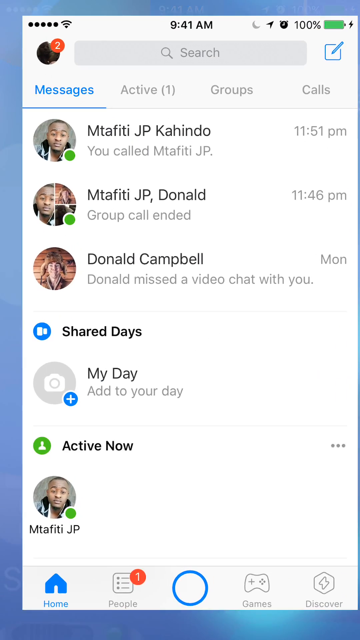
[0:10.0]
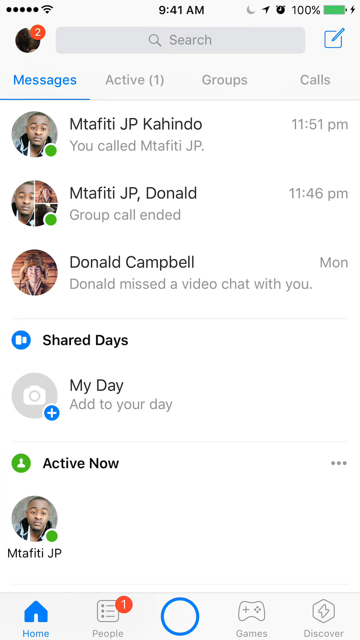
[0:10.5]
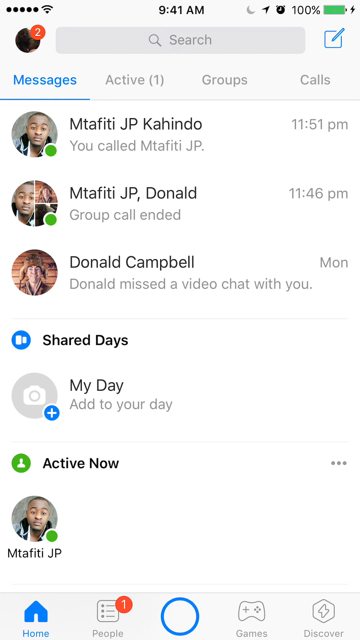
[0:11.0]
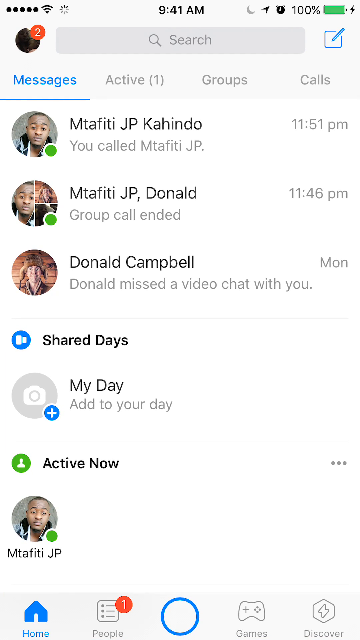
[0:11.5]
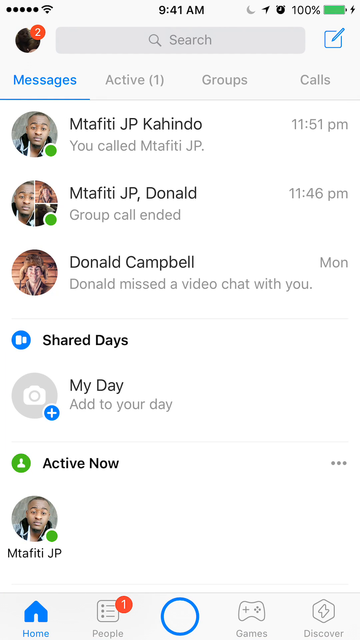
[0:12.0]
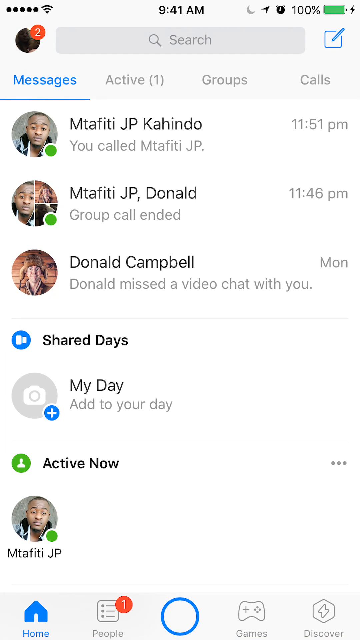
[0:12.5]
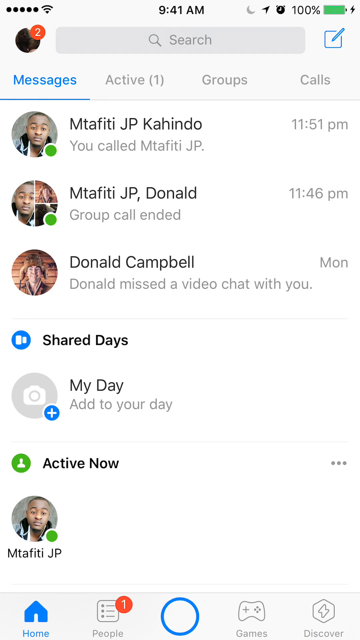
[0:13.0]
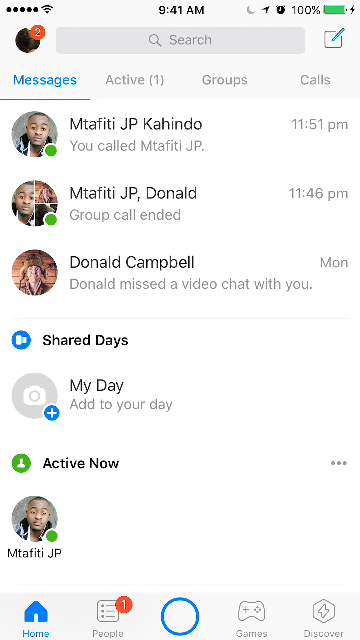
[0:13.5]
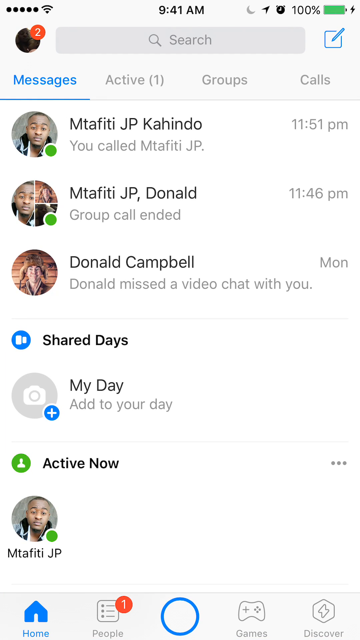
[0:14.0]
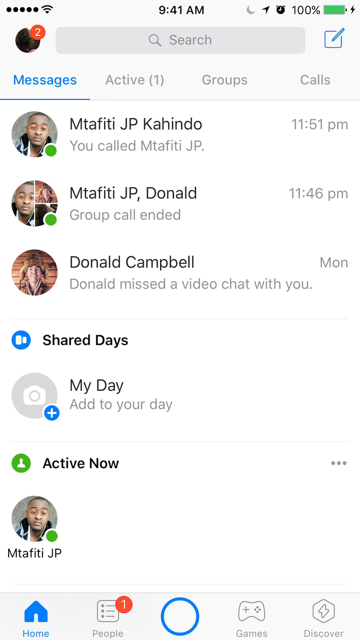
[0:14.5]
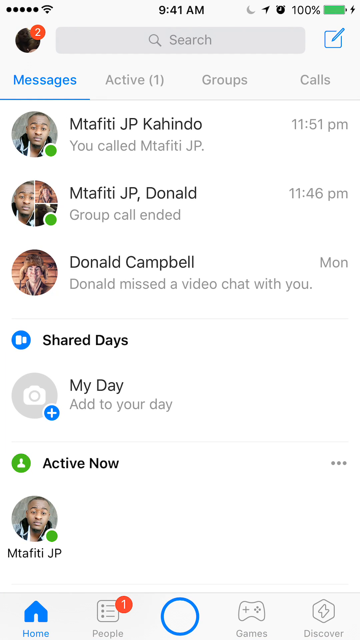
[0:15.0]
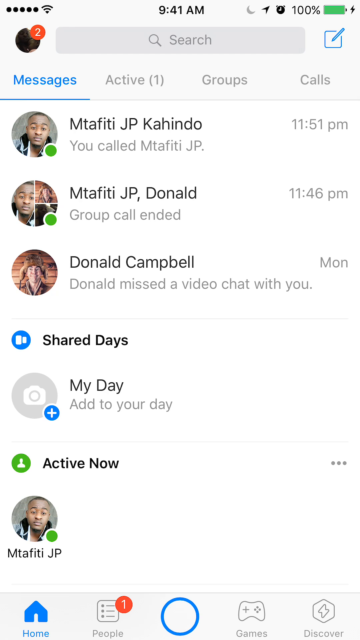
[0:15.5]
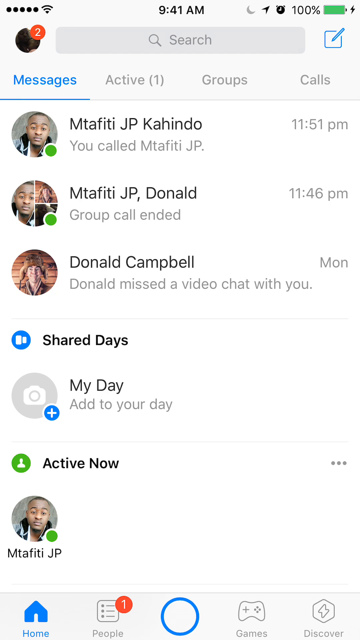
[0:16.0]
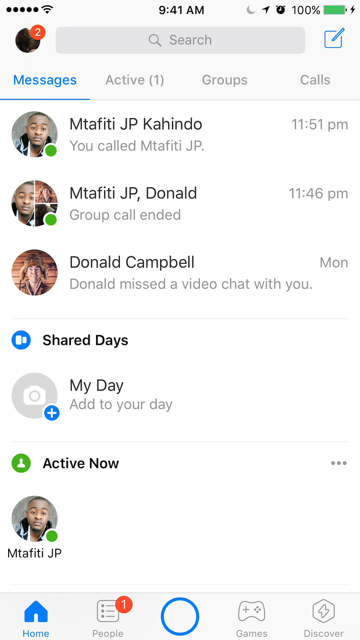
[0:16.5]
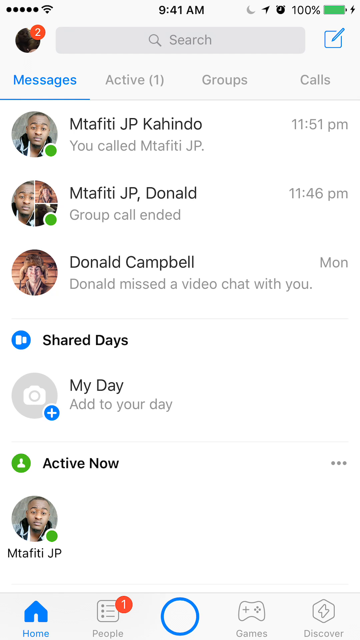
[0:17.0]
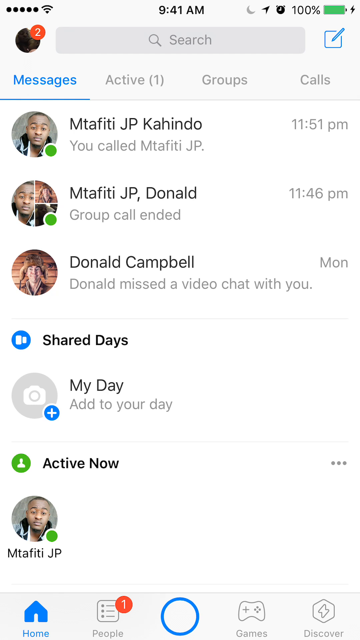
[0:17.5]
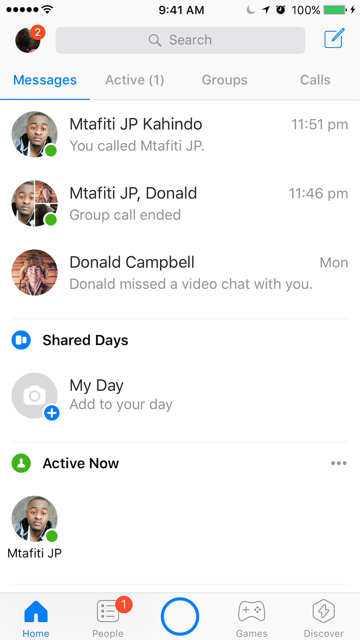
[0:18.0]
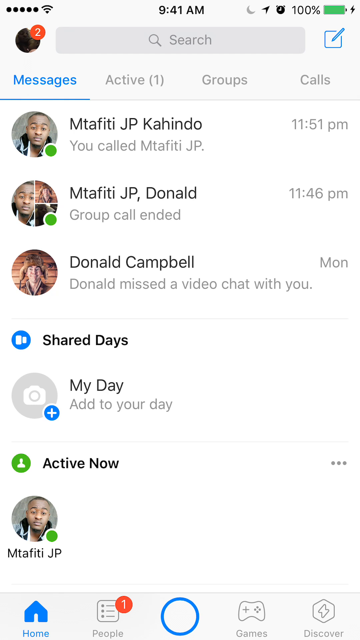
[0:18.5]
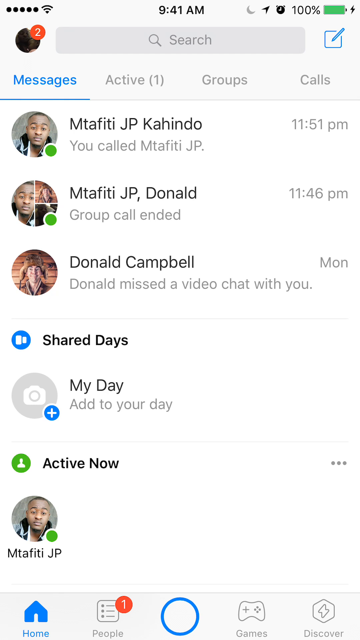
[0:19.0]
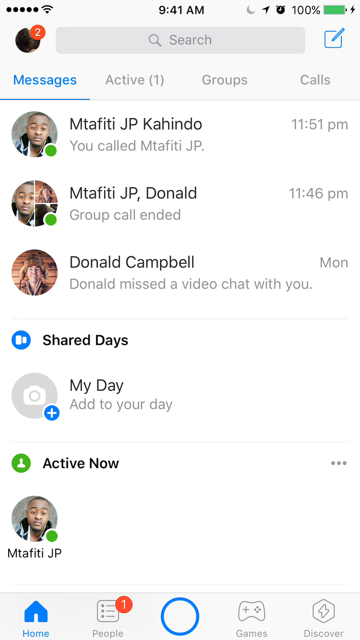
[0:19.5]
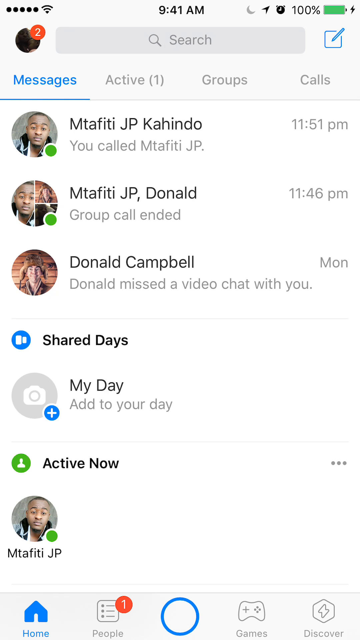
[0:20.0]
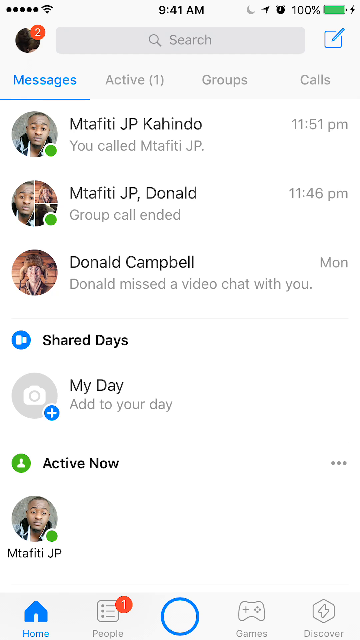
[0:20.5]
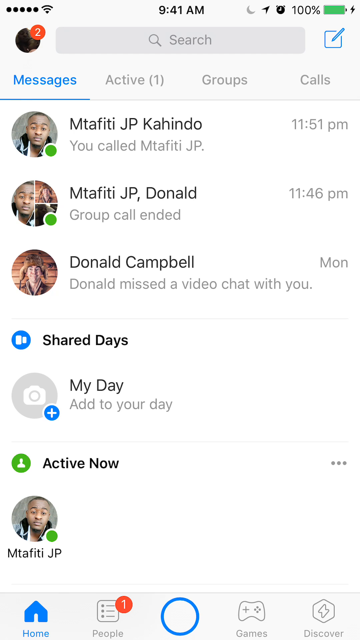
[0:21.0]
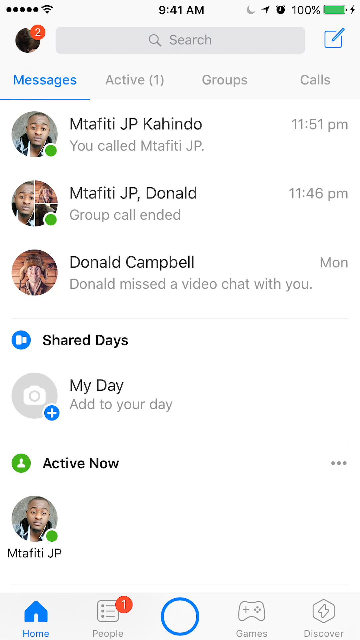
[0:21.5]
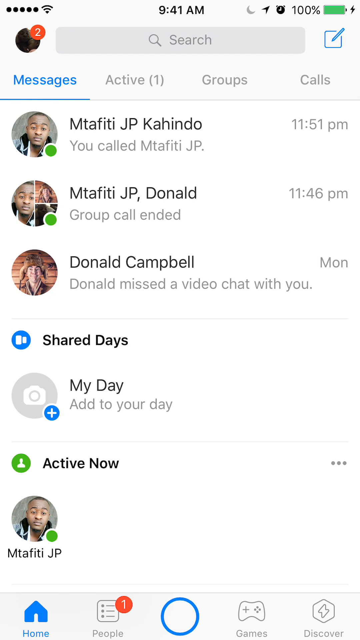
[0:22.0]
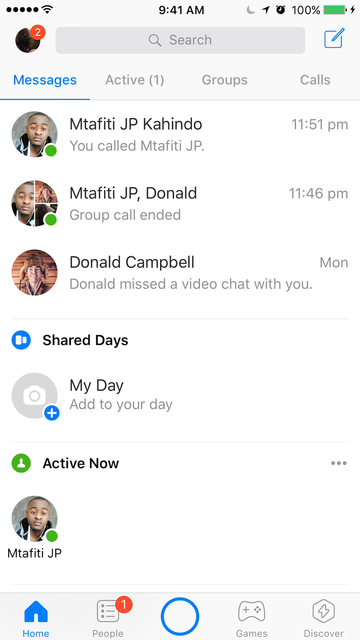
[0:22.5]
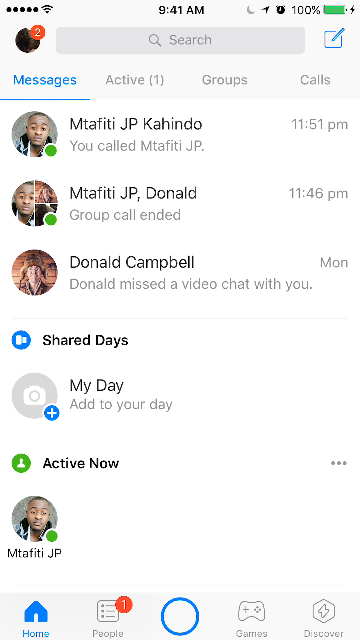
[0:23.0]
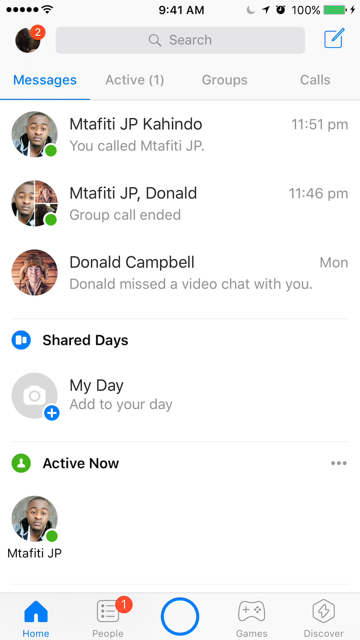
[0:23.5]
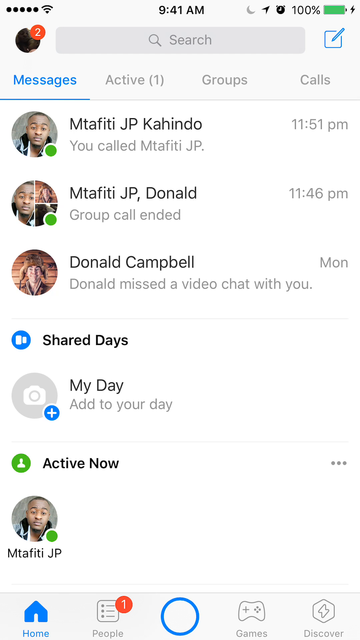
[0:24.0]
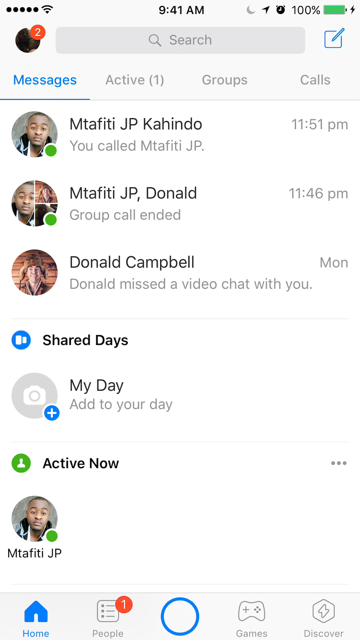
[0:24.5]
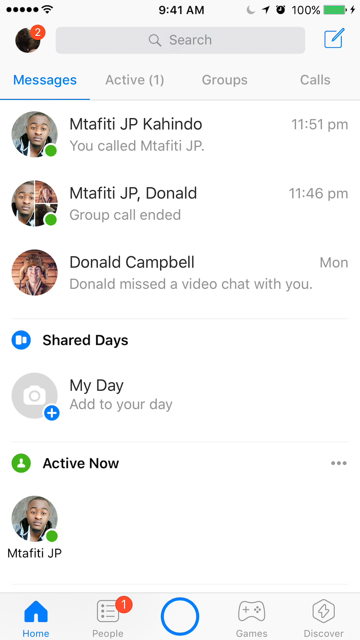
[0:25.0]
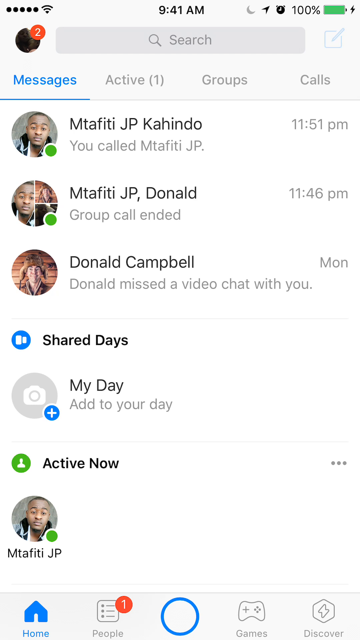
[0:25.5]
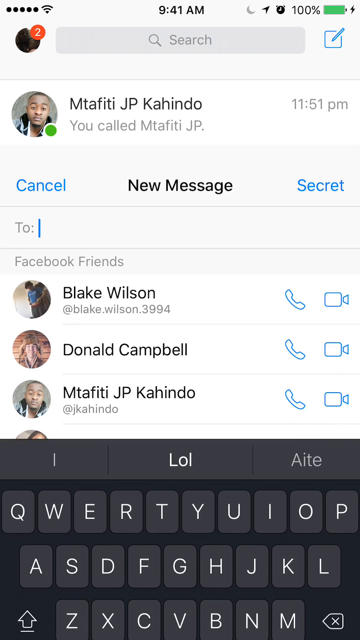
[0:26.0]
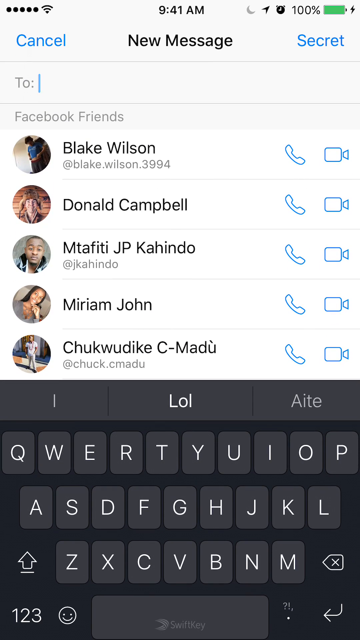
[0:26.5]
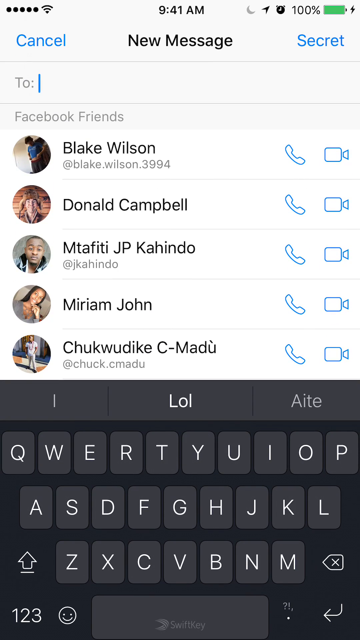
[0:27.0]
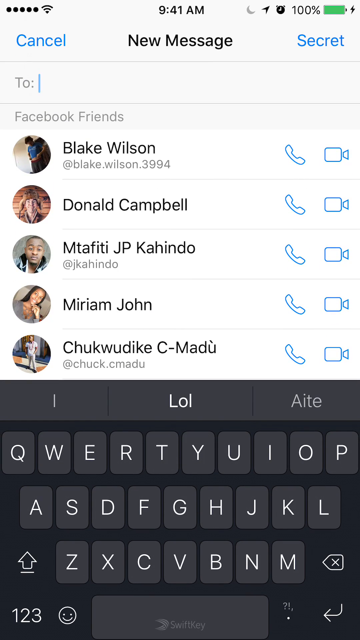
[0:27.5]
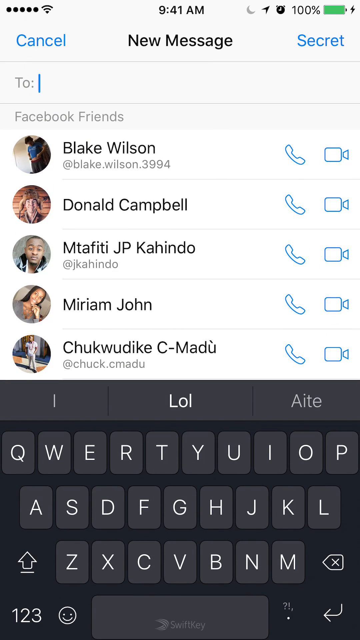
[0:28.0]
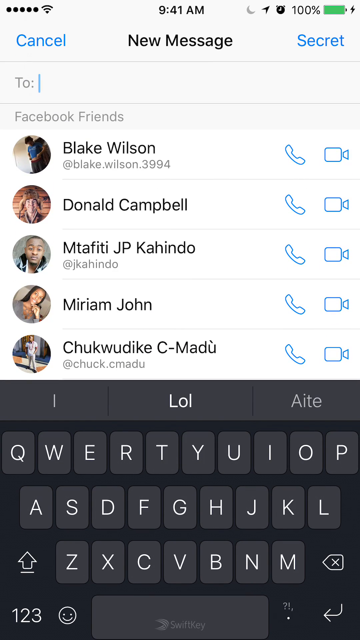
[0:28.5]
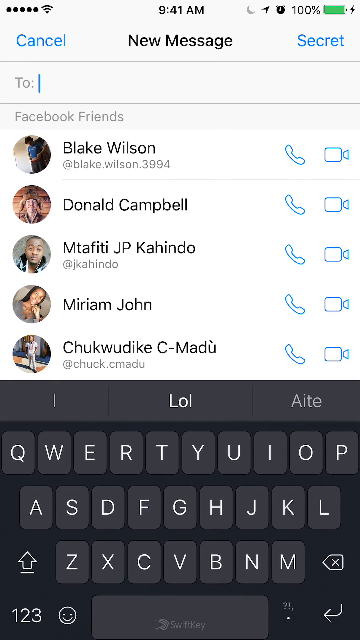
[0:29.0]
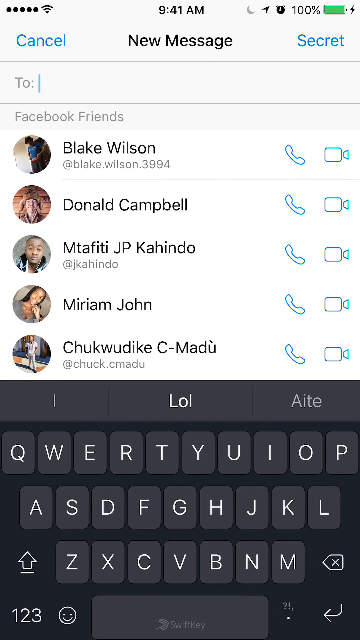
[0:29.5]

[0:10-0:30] A Messenger screen is open on a cell phone. The time at the very top reads 9:41 AM, with 100% battery charge in the upper right corner and full signal in the upper left. The screen indicates two new messages. The user's profile picture is on the left side, and a search bar is at the top. Four tabs run across the top, reading "messages", "active", "groups" and "calls", and the messages tab is selected. Several messages come from someone named Mitafiti J.P. Kahindo, and below him is Donald Campbell. The view zooms in a little for a moment and then holds on the screen while the person looks at the messages without doing anything. Suddenly they open a new message and begin typing the recipient's name in the "to" section.